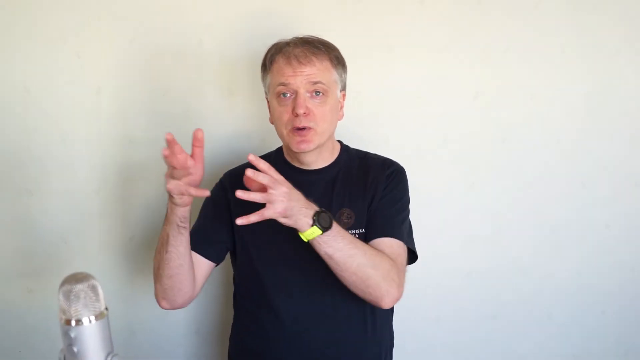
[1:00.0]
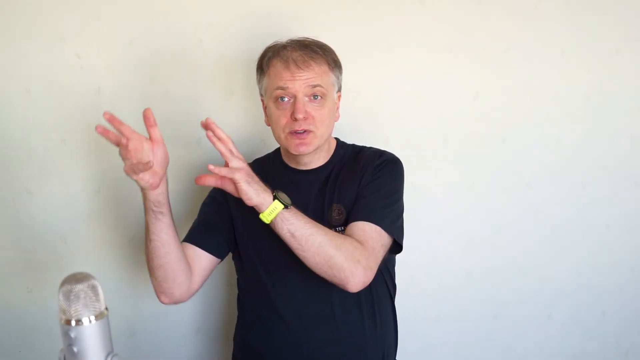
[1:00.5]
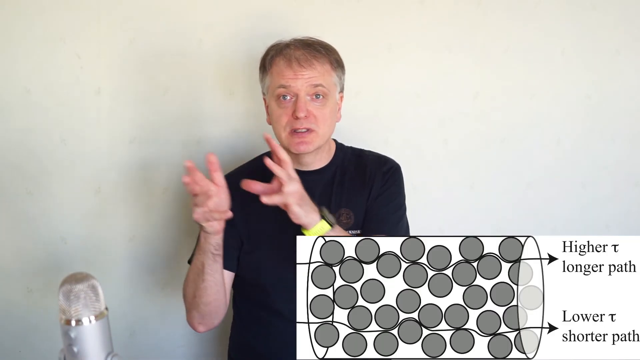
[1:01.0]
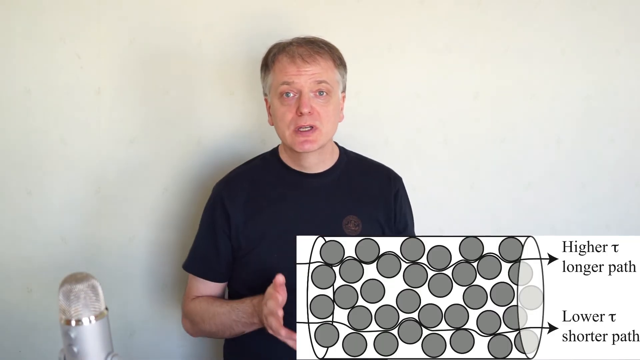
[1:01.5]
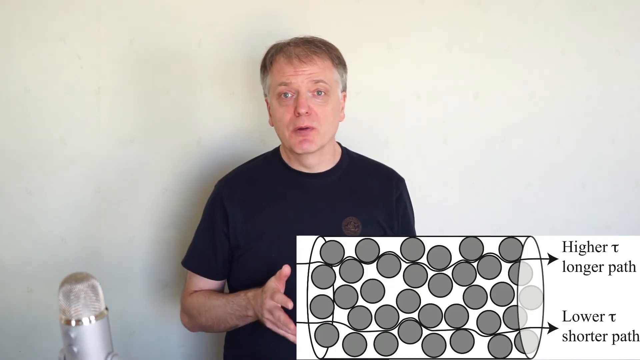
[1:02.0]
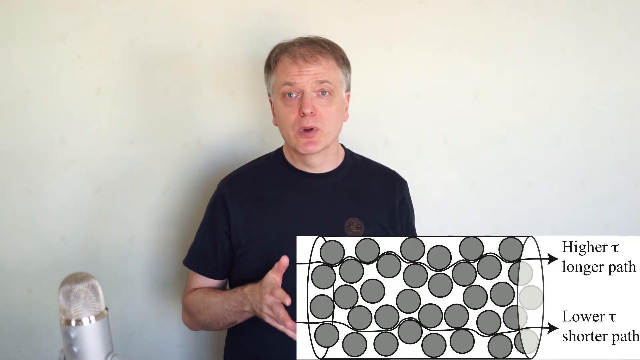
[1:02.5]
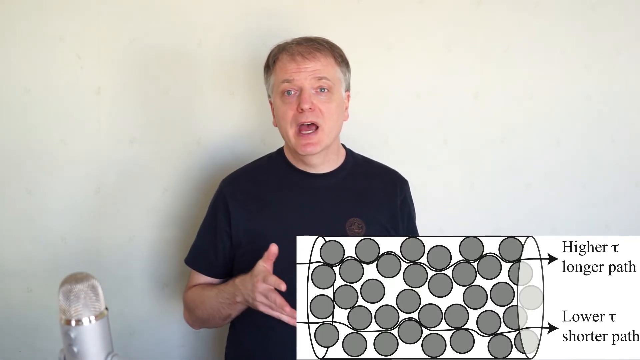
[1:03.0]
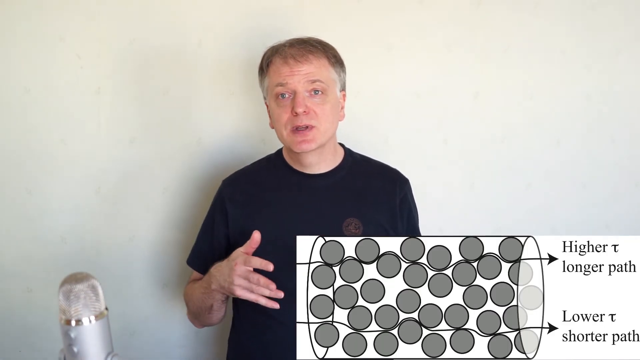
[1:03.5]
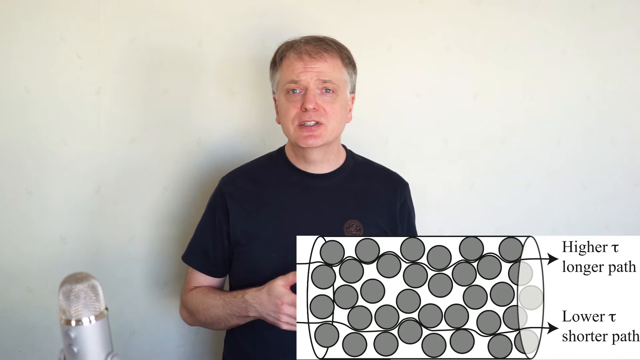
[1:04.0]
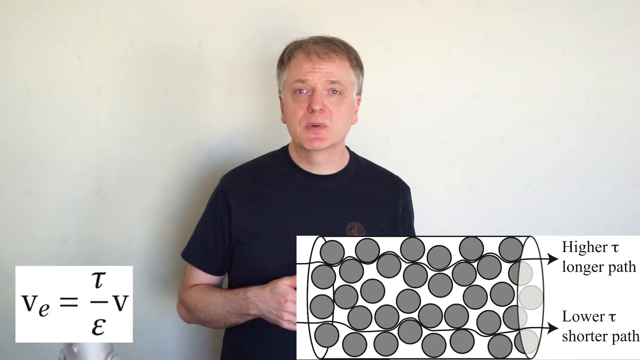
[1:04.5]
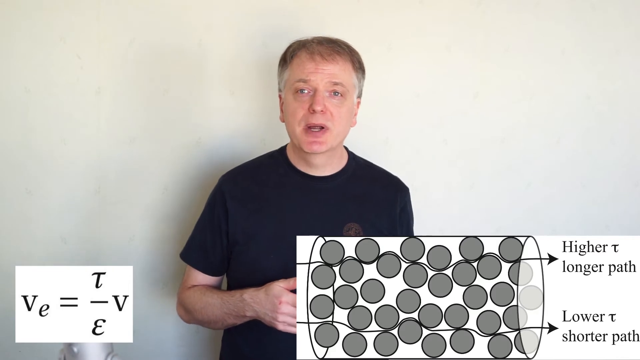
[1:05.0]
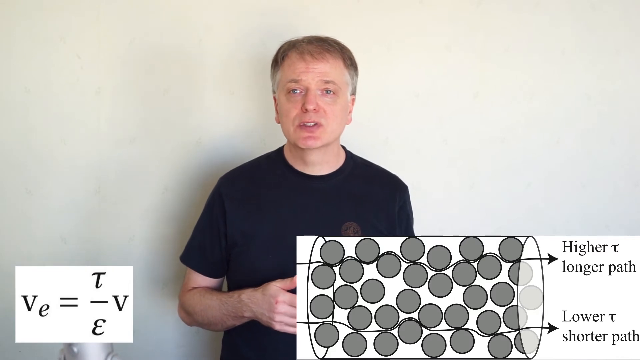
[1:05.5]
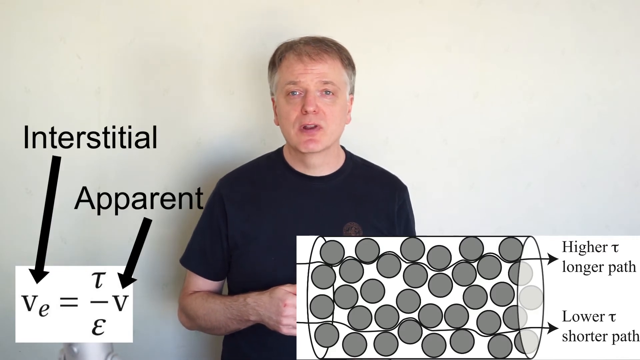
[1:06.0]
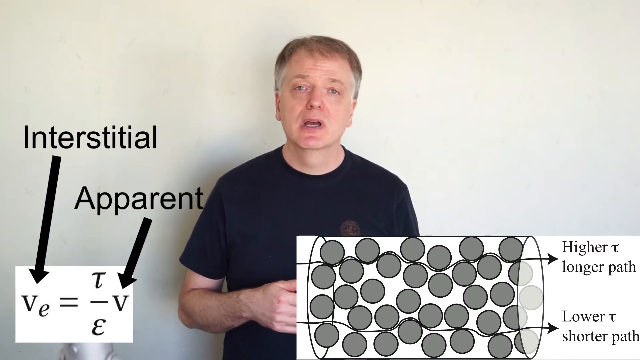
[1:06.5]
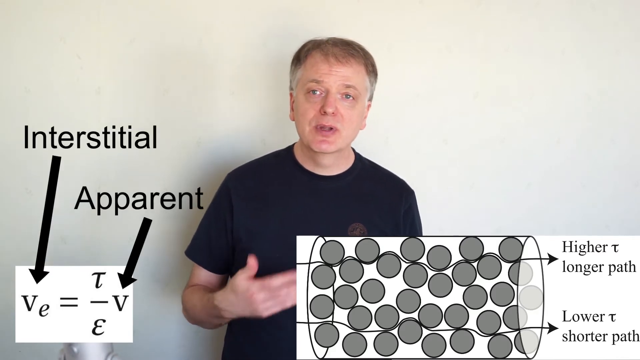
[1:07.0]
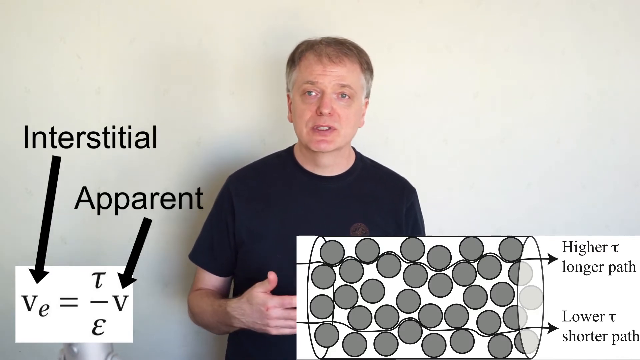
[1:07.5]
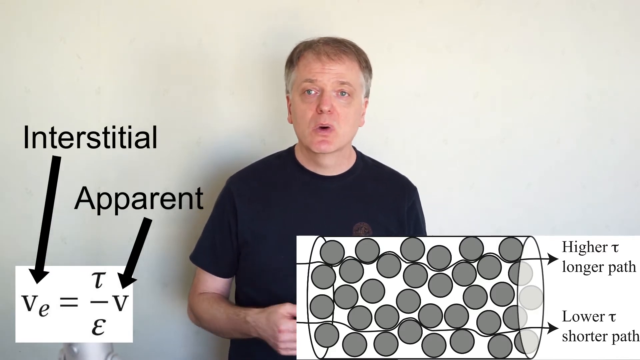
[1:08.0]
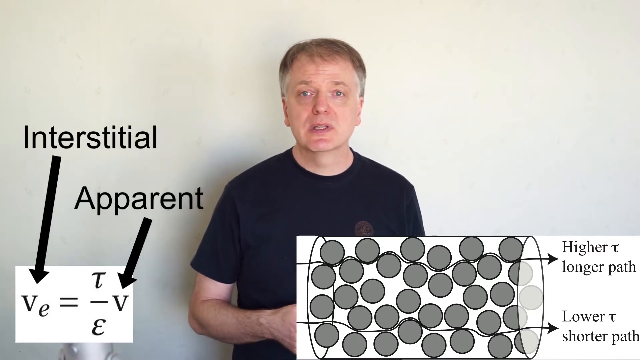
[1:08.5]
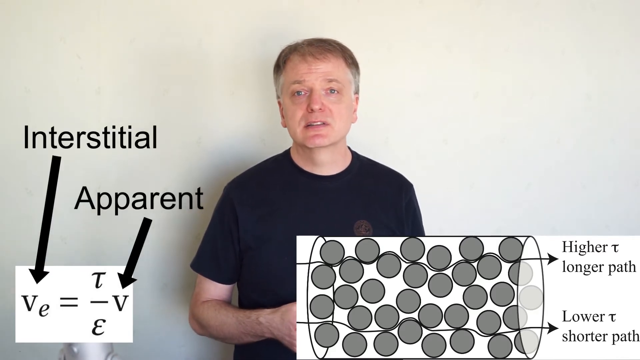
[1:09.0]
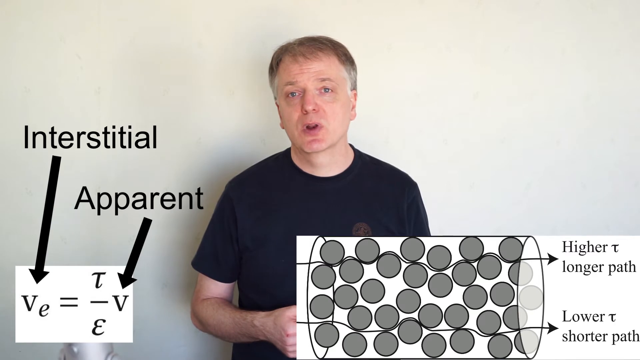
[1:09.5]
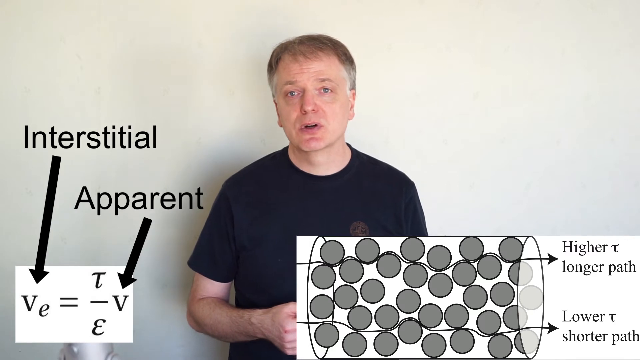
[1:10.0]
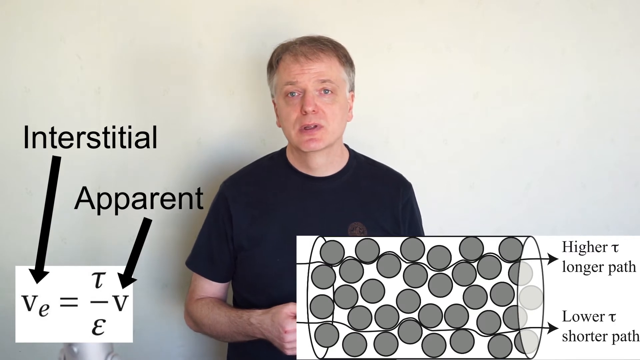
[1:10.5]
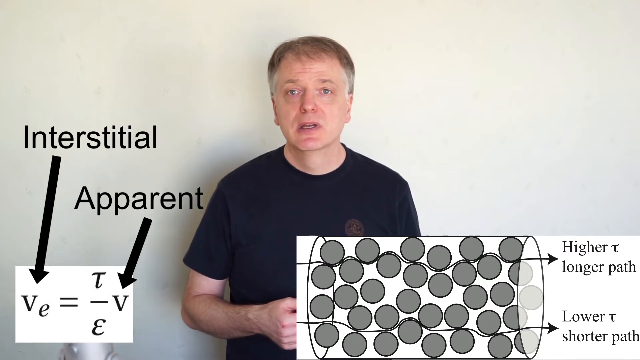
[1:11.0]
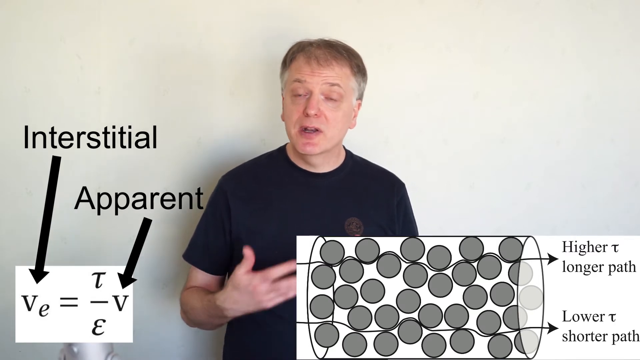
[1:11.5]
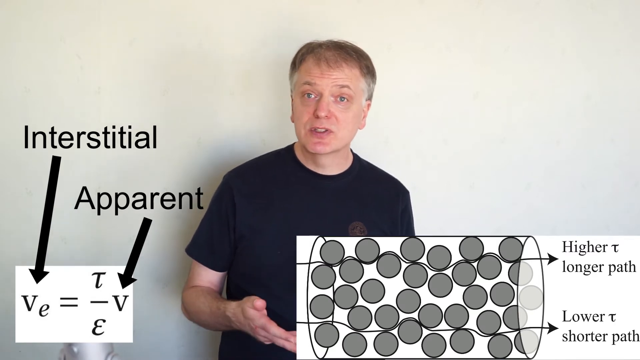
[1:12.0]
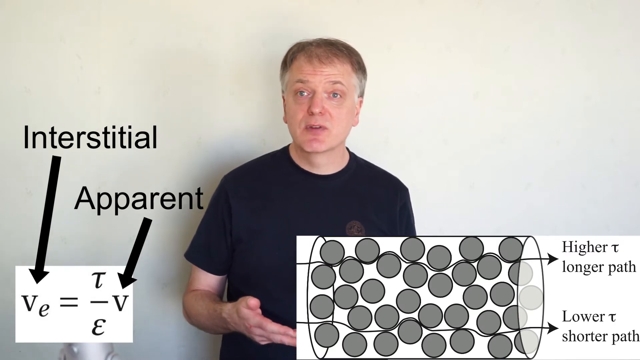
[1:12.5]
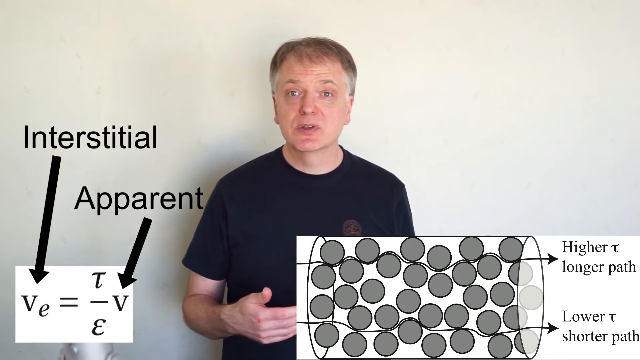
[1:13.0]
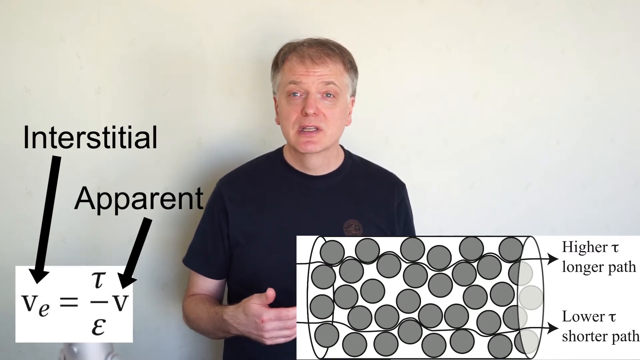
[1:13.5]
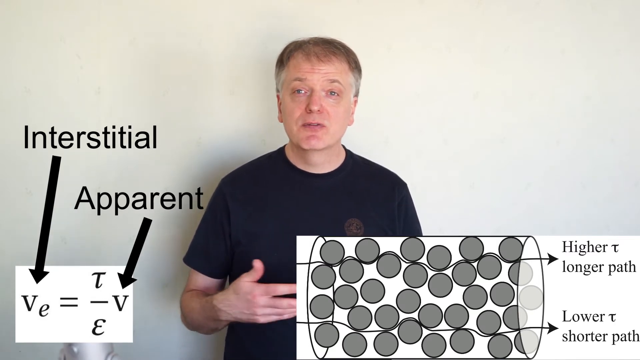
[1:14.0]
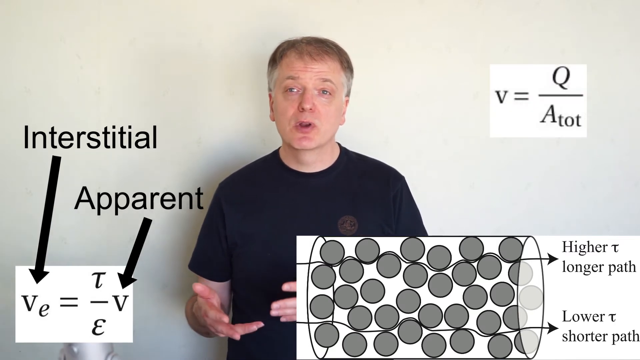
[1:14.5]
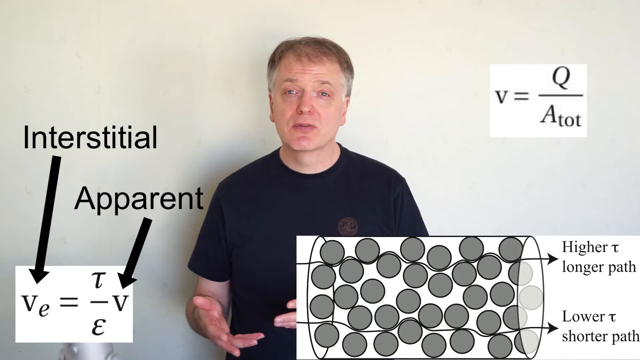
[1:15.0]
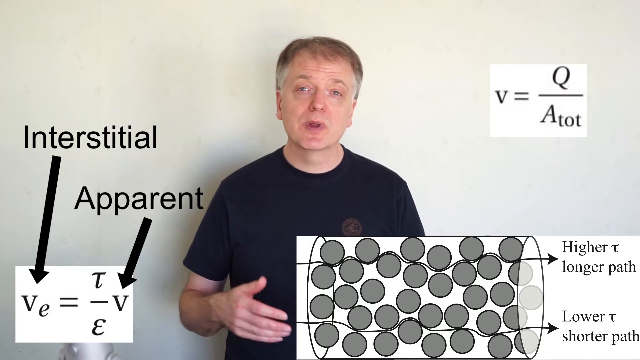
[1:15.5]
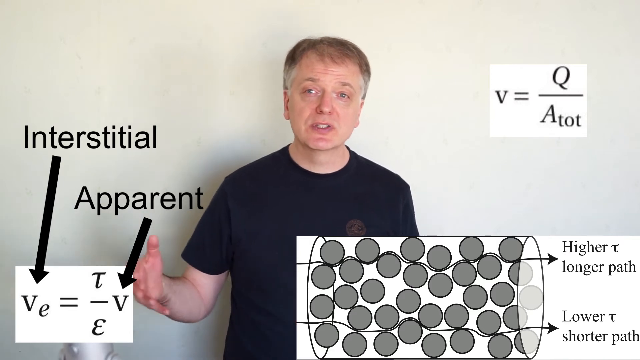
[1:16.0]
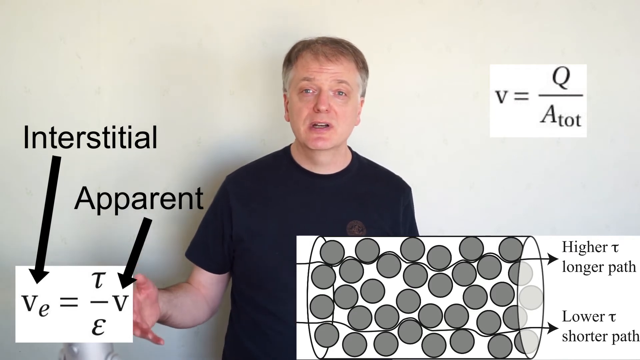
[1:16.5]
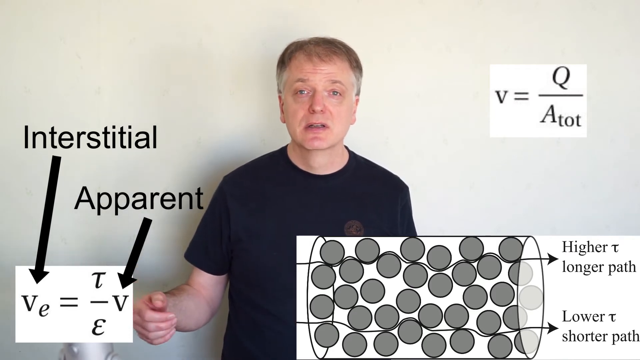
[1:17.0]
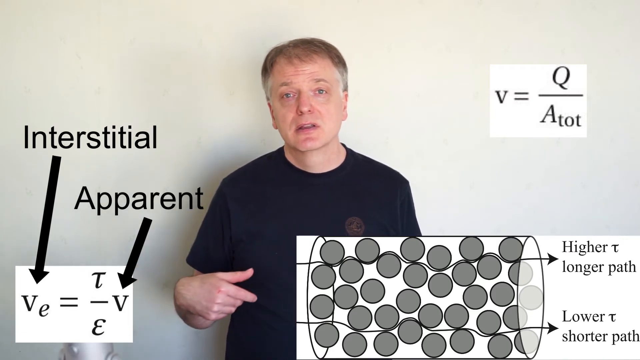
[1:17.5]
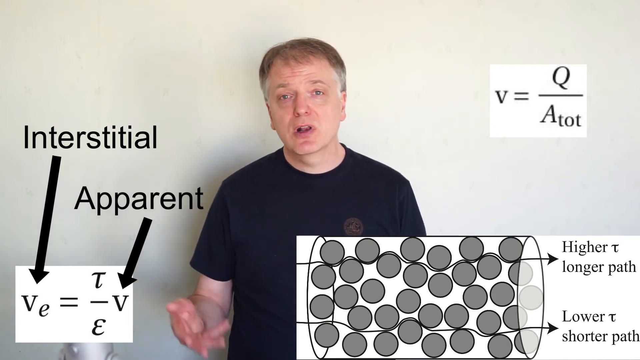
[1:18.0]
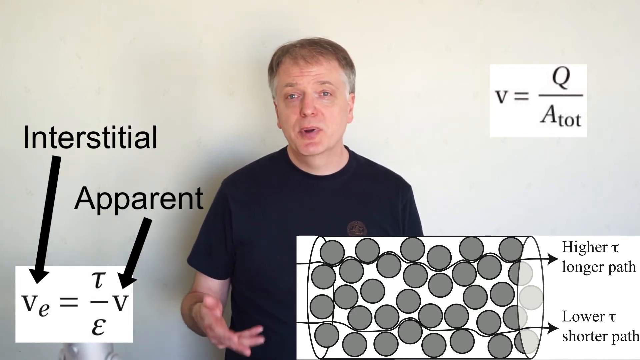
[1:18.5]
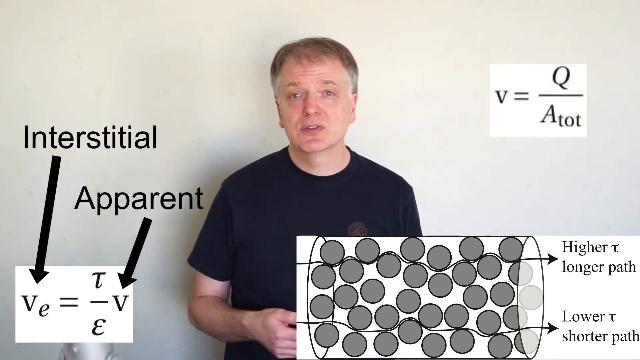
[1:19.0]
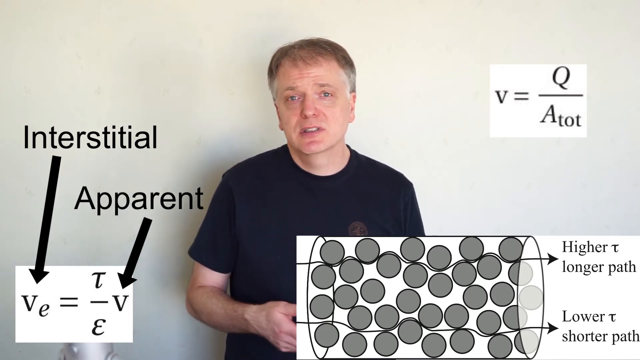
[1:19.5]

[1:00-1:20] A man stands in front of a white wall with his hands kind of pointed out toward the left and his fingers spread out. Text reads "higher, longer path, lower T, shorter path", and there is something like a column of arrows going through a tipped-over cylinder. On the left side, text reads "interstitial" and "apparent", with an equation "VE equals T over E". In the upper right-hand corner, a problem reads "V equals Q over A T O T". The man wears a short-sleeved black shirt with some print on his left side, and a watch with a black middle circle and a yellow wrist strap.